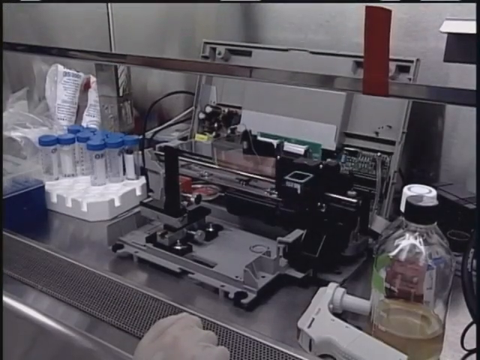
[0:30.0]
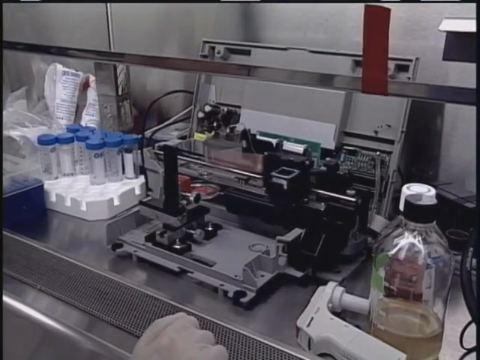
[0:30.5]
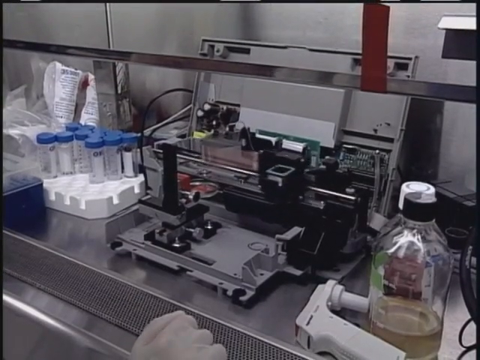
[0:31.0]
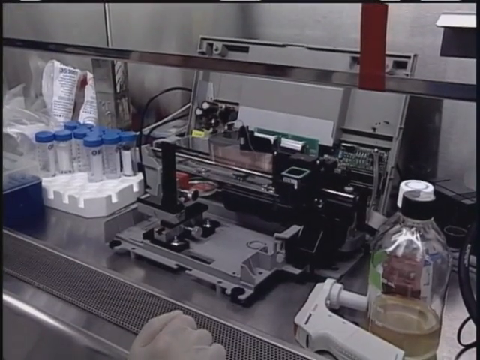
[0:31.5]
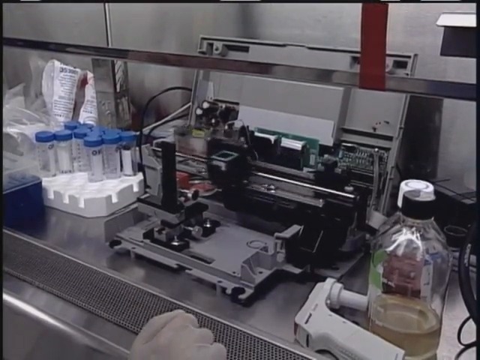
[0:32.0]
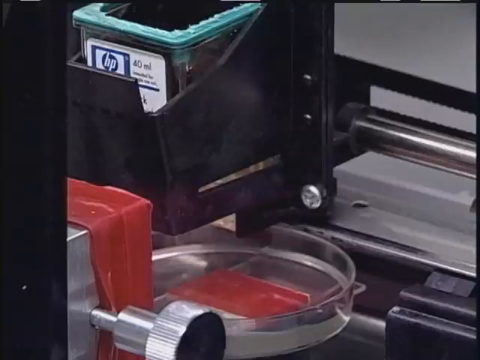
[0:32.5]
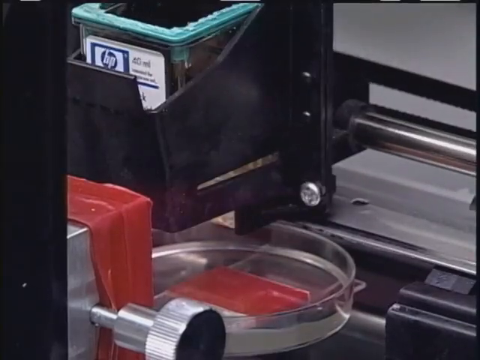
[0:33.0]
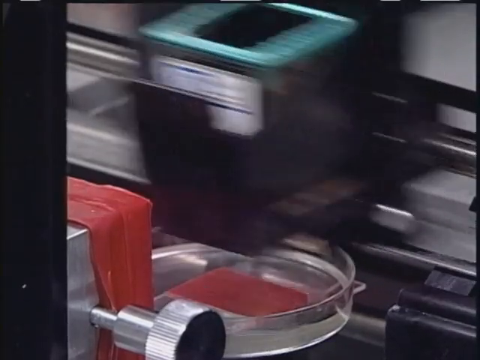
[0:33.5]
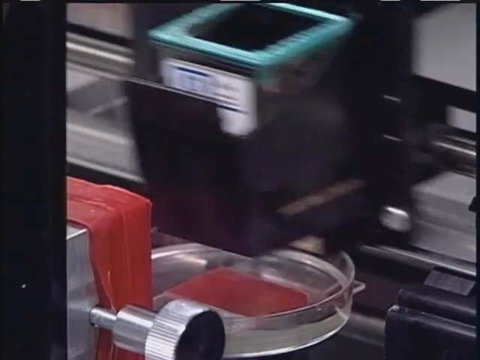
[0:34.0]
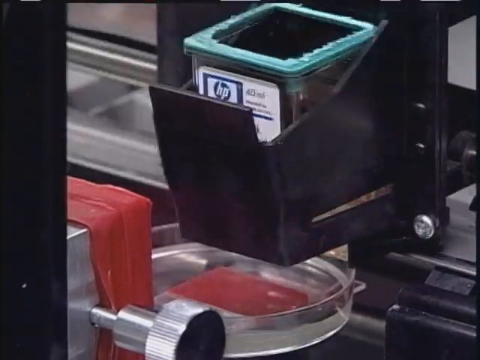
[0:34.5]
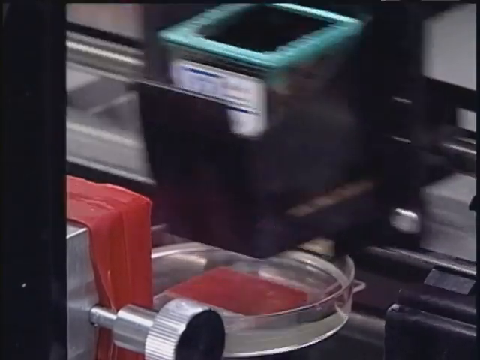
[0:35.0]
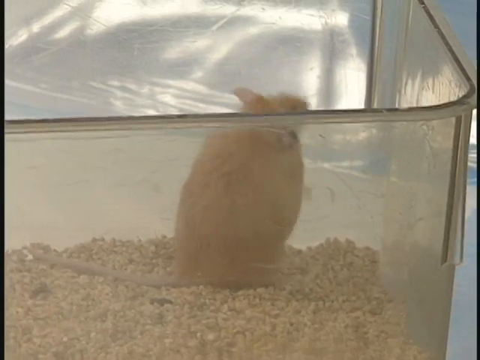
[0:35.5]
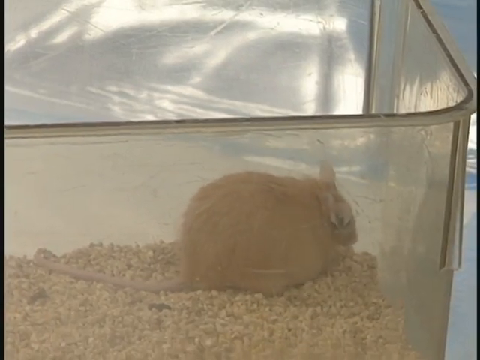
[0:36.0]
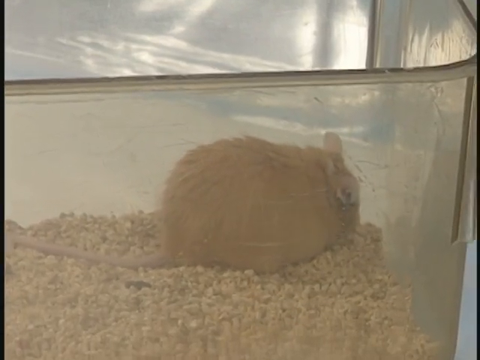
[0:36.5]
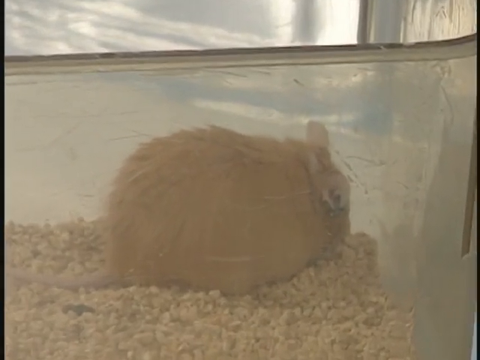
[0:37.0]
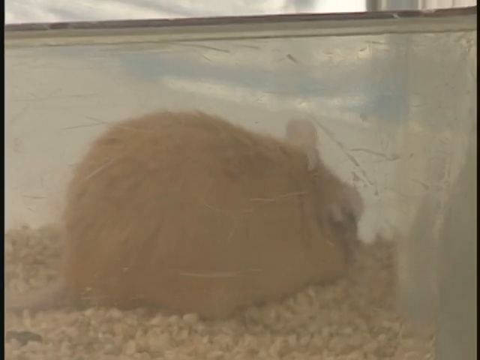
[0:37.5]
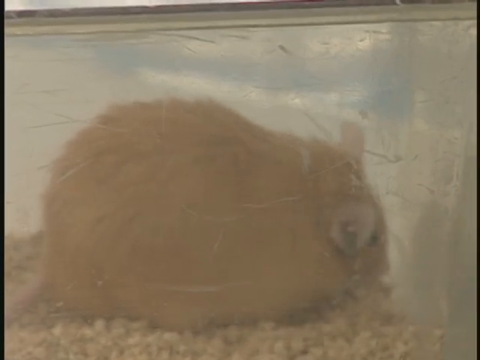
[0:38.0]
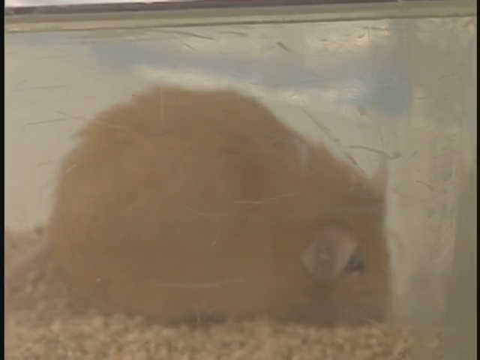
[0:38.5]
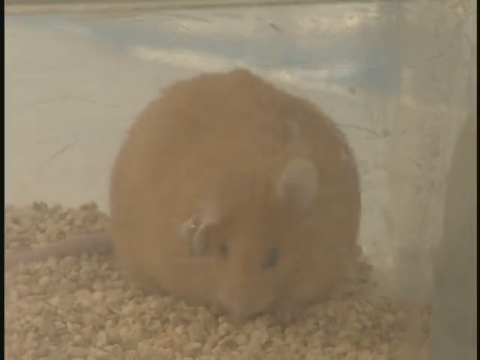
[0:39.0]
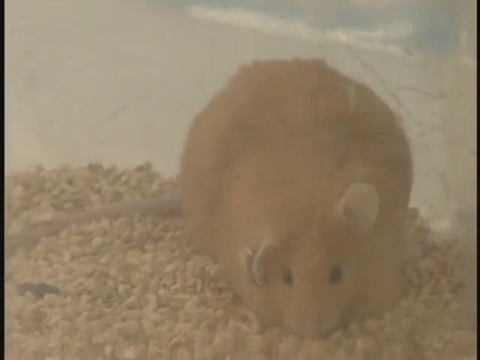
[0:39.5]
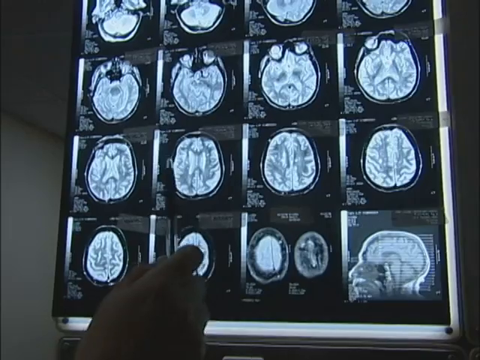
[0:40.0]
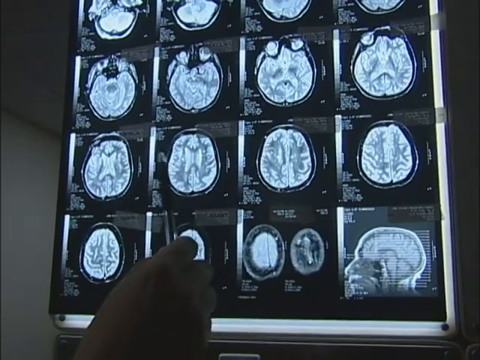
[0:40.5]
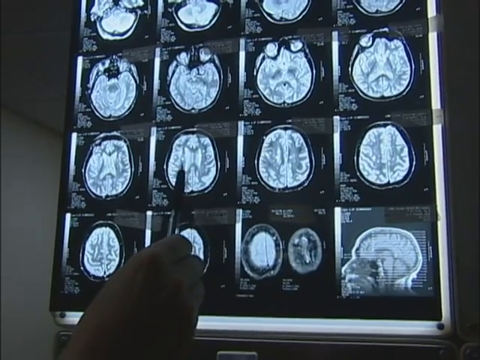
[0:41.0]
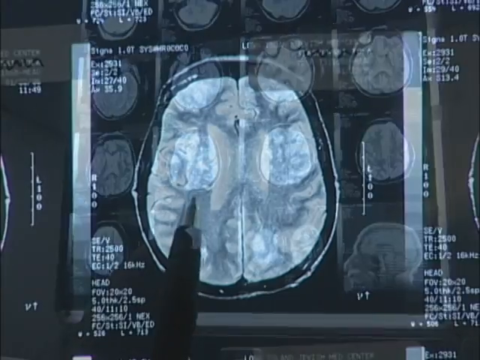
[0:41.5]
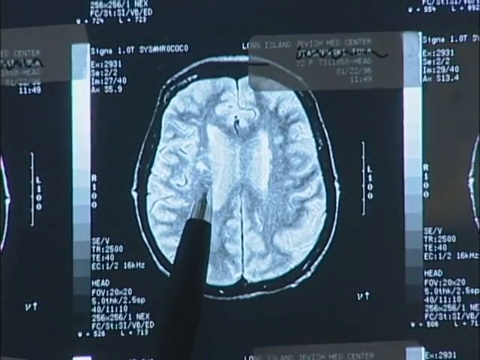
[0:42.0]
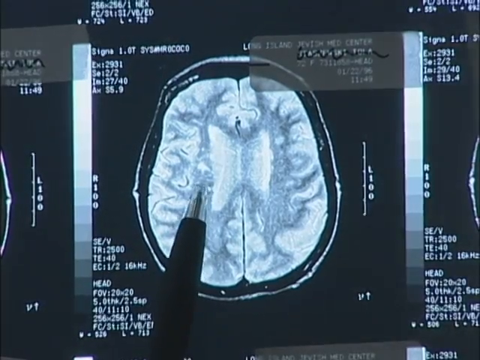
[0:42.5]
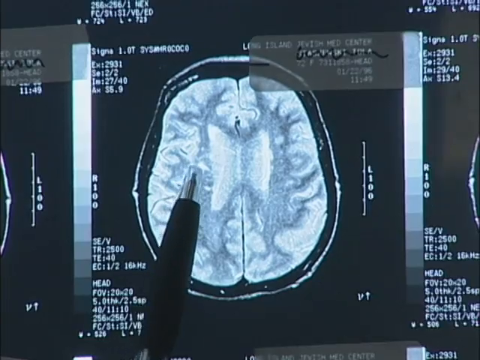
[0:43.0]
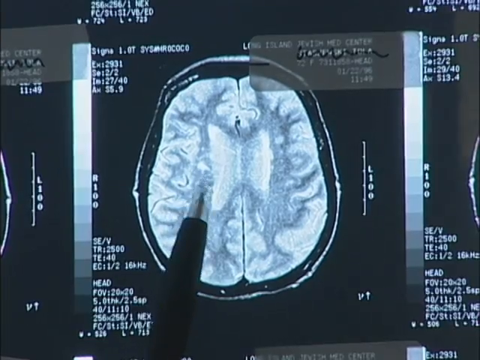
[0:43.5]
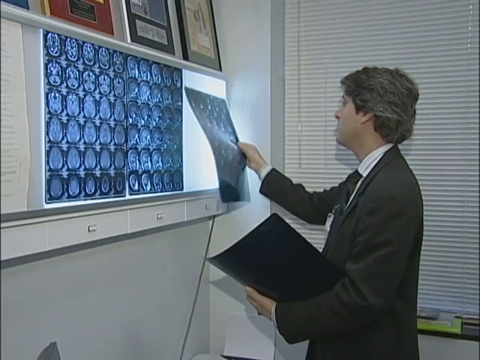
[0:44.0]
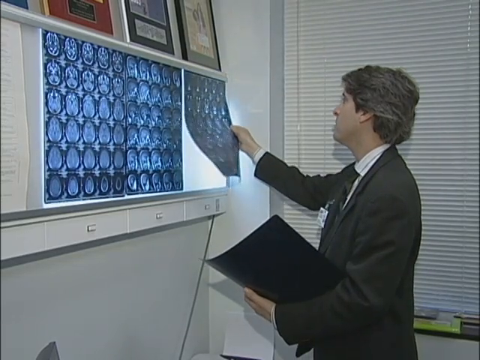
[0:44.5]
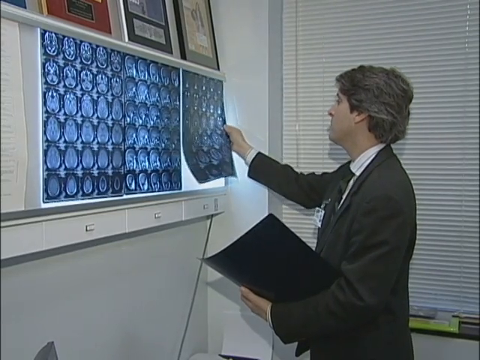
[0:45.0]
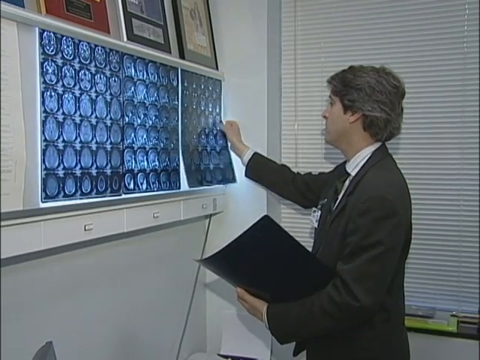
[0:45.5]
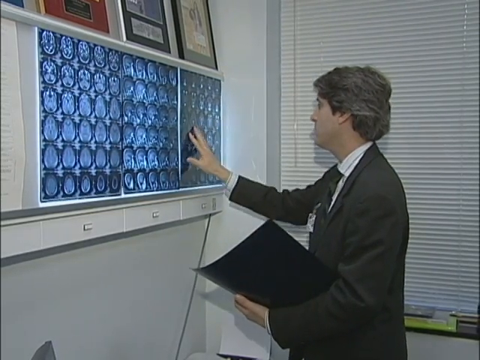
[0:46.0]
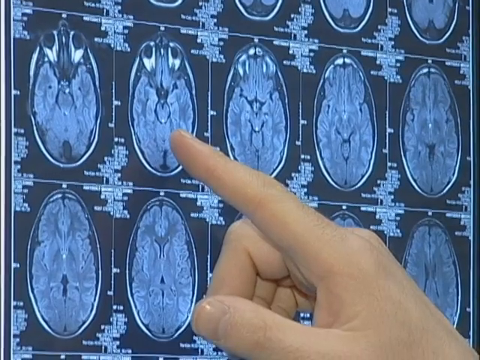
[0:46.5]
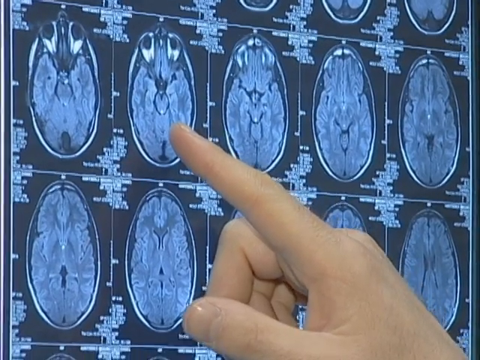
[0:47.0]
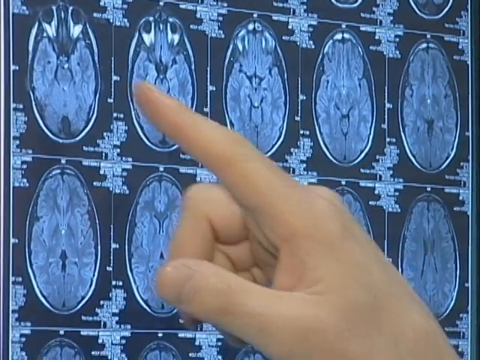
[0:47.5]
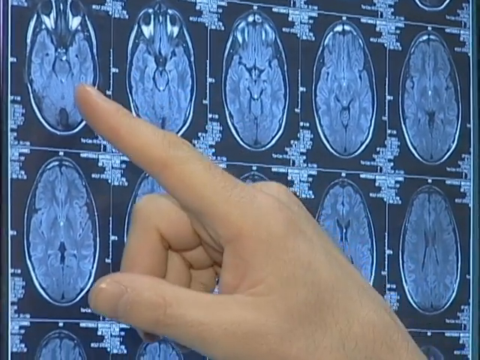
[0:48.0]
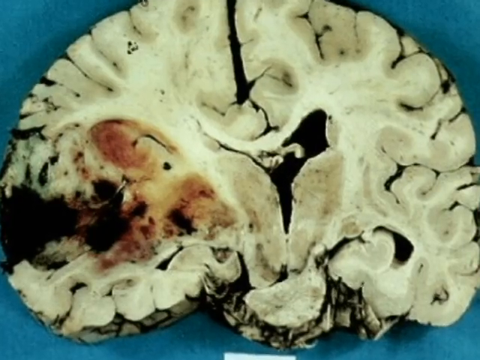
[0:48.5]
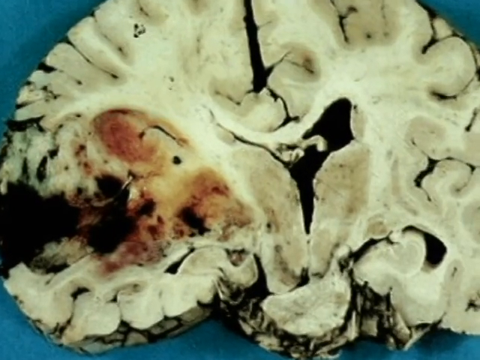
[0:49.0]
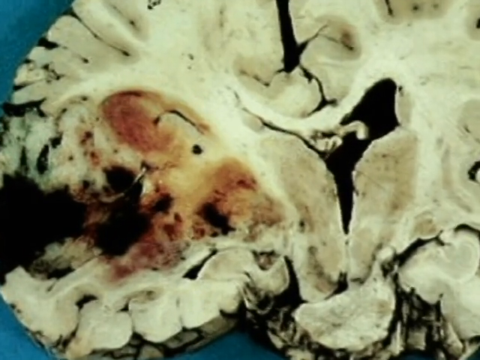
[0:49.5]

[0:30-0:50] A machine is on a workbench in a scientist's laboratory. It seems to have a printer or reader that moves from right to left across the front of the machine and back again, several times. A close-up shows the machine moving quickly from side to side in front of the Petri dish. Next comes a clear tank with a rat in the bottom; the rat is very round. A scientist's hand with a pen points towards a series of x-rays of the brain, pointing to one in the second row, and a close-up shows him pointing to a particular section to the left of the core of the brain. Then a doctor, a man in a suit, puts a strip of x-rays into an x-ray reader on a wall; he is holding a file and points to a section on the x-rays. An image follows of a cutout of a brain segment through the centre, showing on the left a damaged area where part of the brain is not showing, a black void, and some sections of the brain are red rather than white. The camera moves closer.